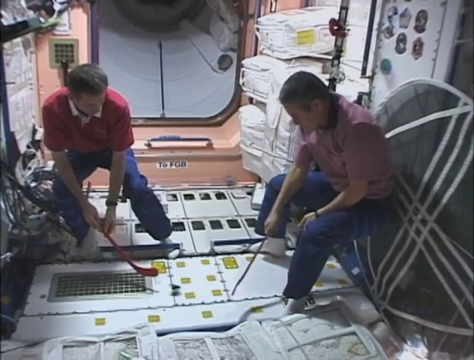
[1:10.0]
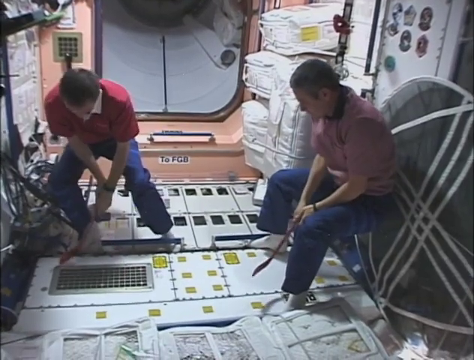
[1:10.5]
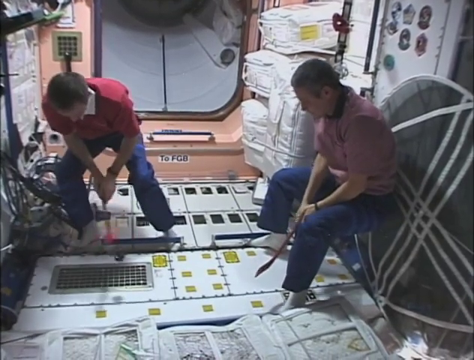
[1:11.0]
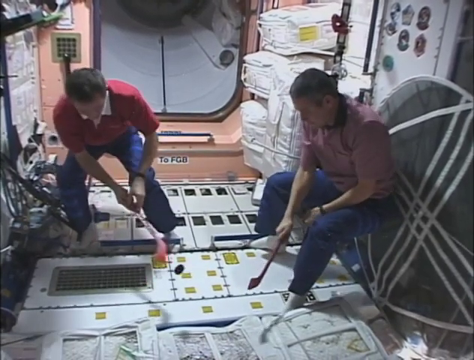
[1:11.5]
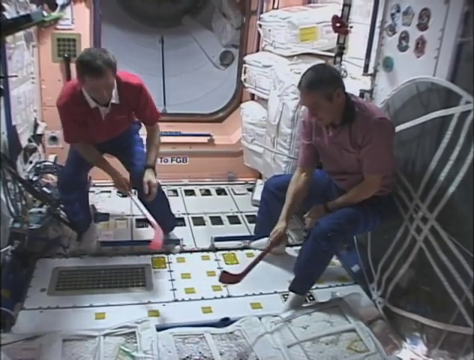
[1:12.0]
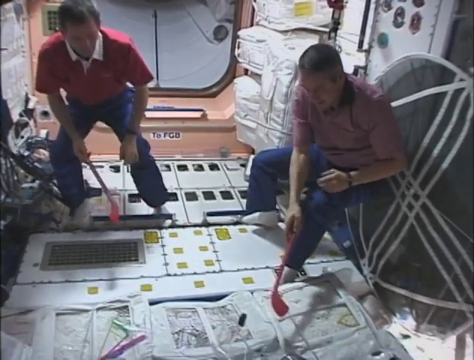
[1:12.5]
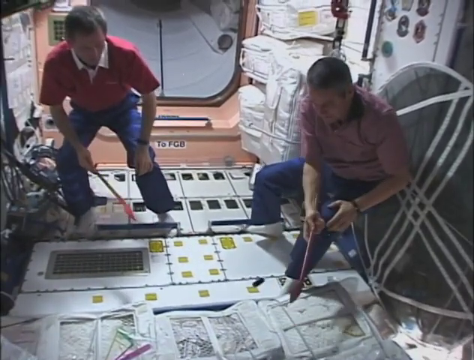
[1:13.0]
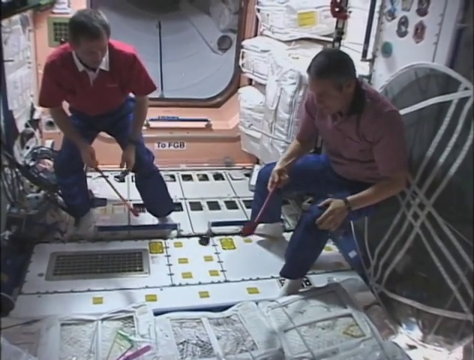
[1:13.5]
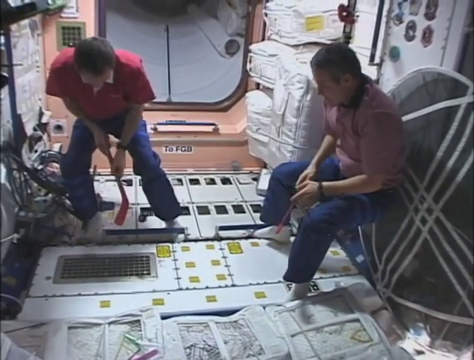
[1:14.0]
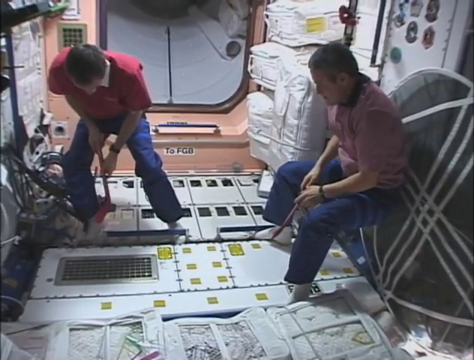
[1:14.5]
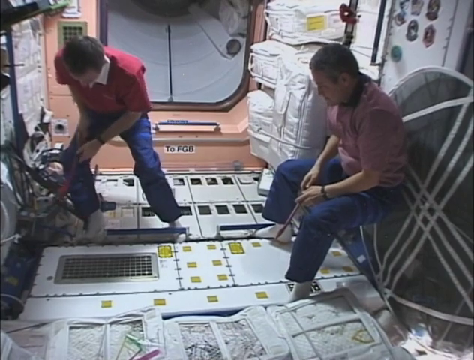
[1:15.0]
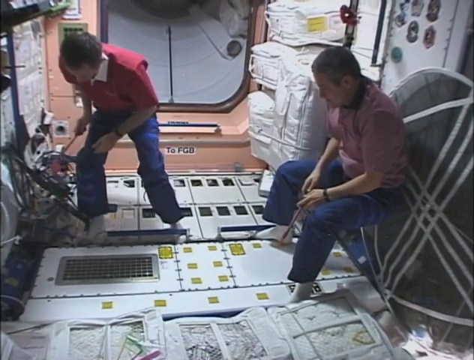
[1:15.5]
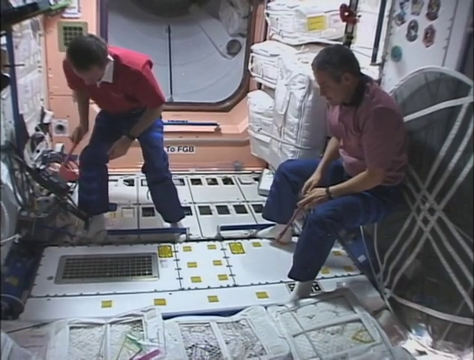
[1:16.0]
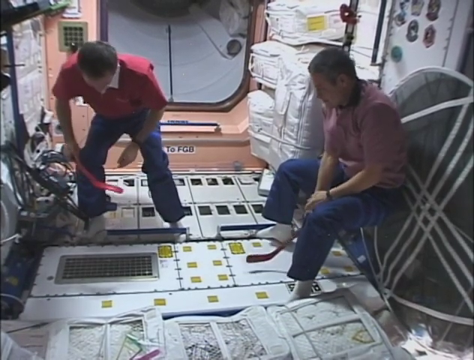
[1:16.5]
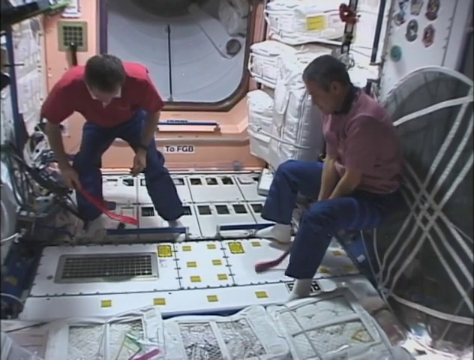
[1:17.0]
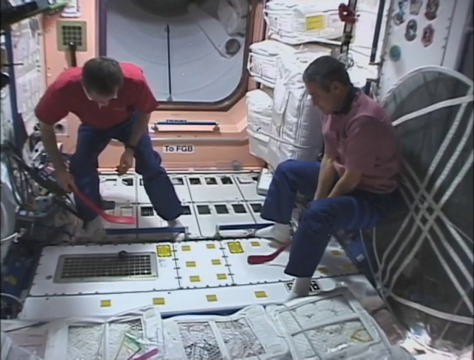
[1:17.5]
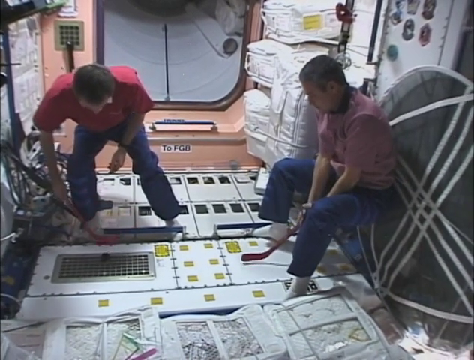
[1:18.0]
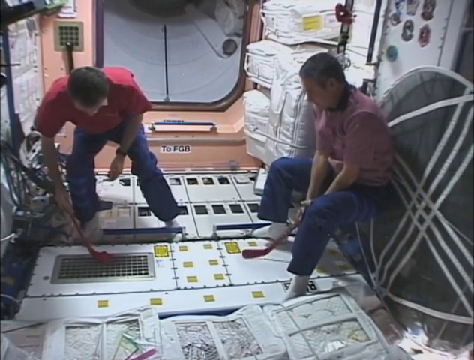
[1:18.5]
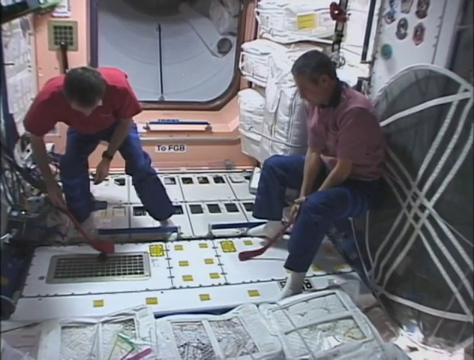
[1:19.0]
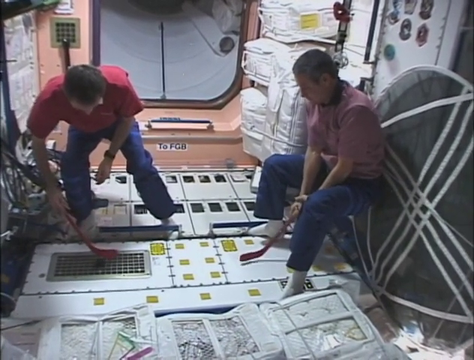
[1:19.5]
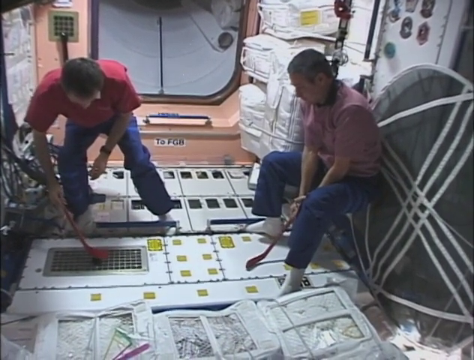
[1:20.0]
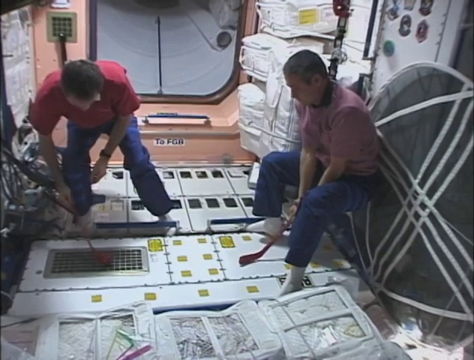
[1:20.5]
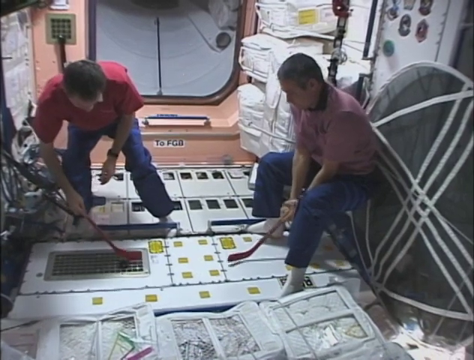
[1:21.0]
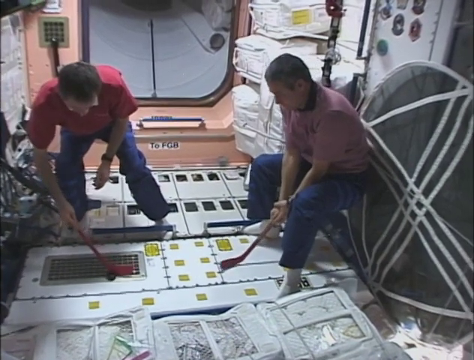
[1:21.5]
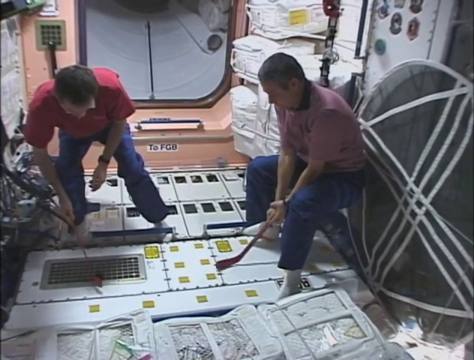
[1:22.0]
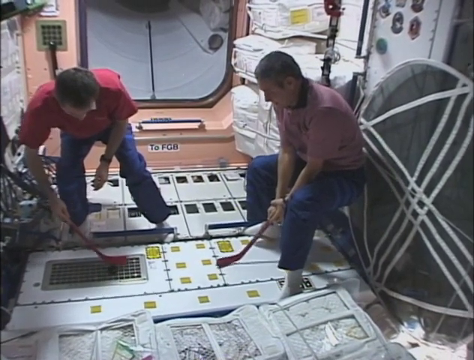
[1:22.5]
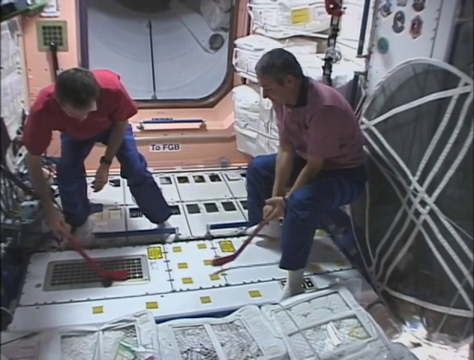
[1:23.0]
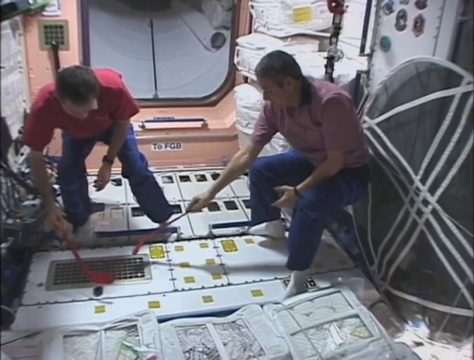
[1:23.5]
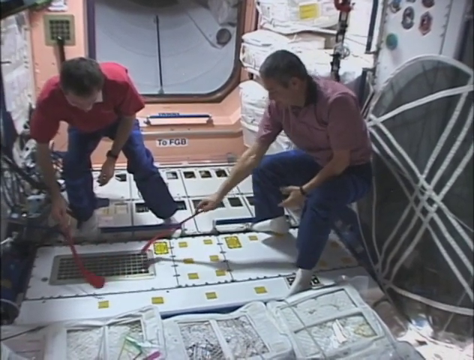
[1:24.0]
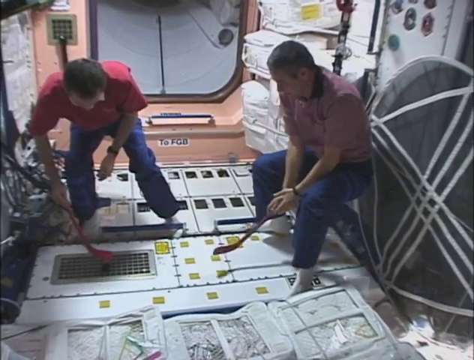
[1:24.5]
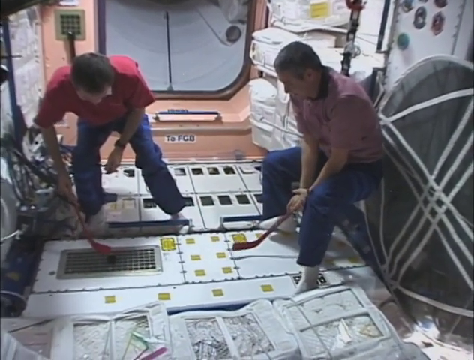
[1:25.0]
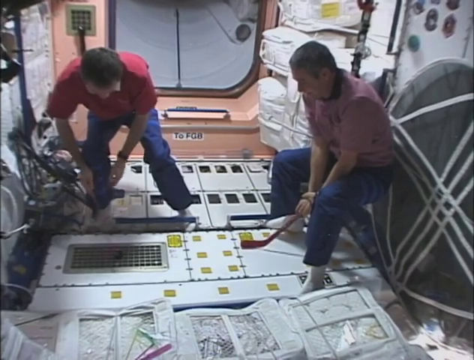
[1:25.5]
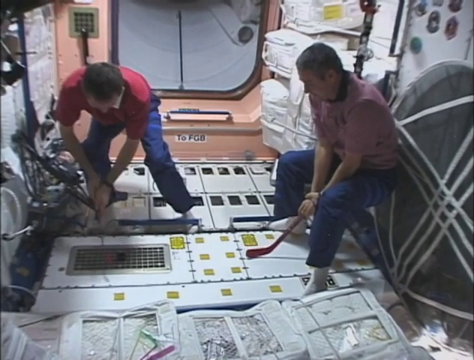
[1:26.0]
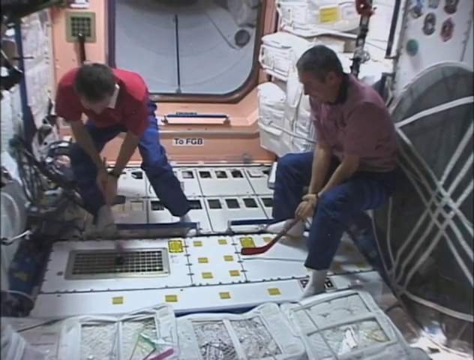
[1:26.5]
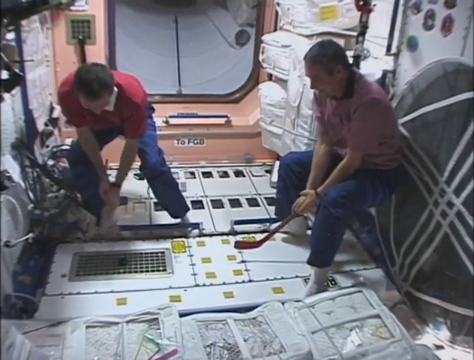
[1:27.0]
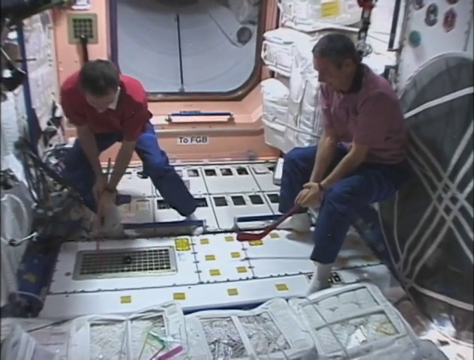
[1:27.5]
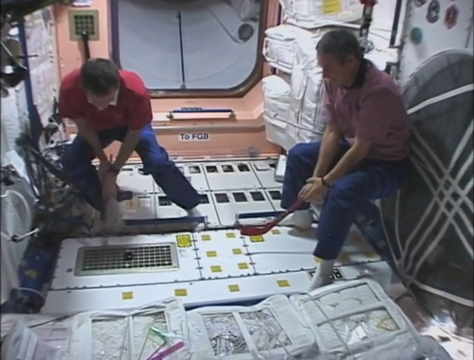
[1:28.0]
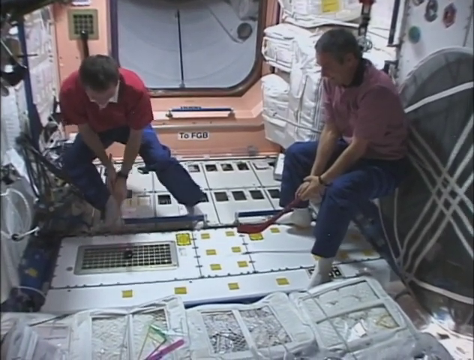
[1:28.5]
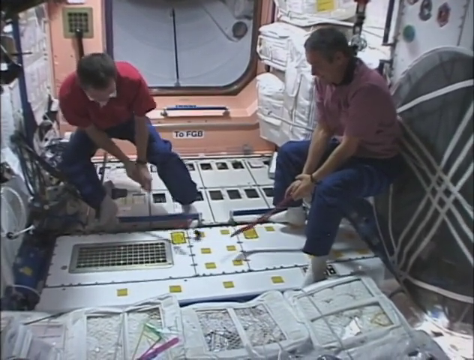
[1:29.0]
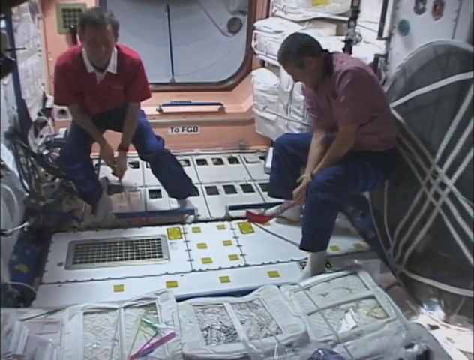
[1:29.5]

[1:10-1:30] The man on the right has his knees bent and is looking over, leaning against a circular surface that looks soft, gray and mesh, with three vertical white stripes, three white stripes across and one diagonal white stripe. The man on the left has his knees bent and is bent over, his hand holding the hockey stick. The puck hovers between the two hockey sticks, then flies beyond the left hockey stick, and the two men joust with it. They finally get the puck to hover over a screened-in area on the ground and hit it; the puck sort of hangs around that area and bounces when they hit it, but when they hit it along the screen it tends to stay flat on the ground and doesn't really hover over the screened area.